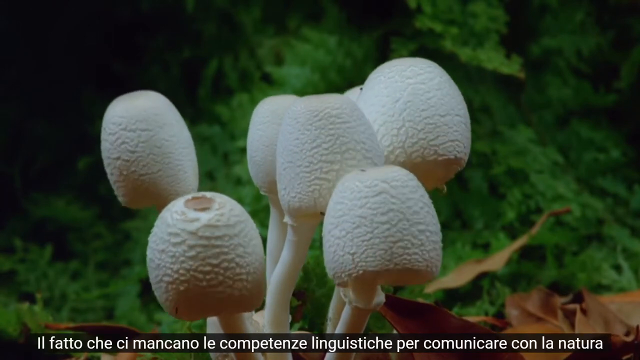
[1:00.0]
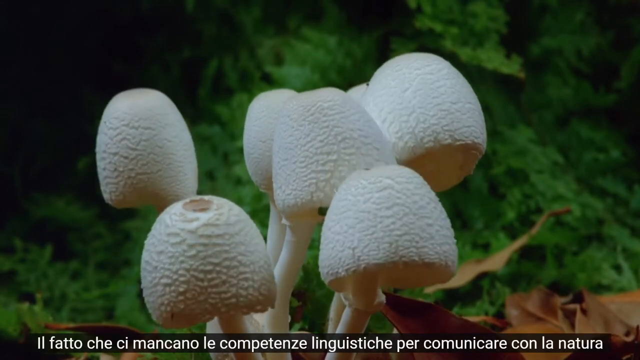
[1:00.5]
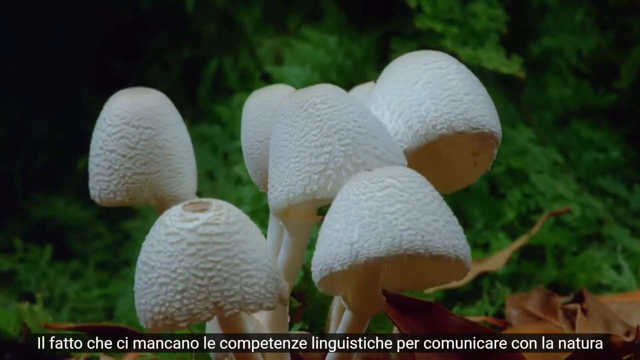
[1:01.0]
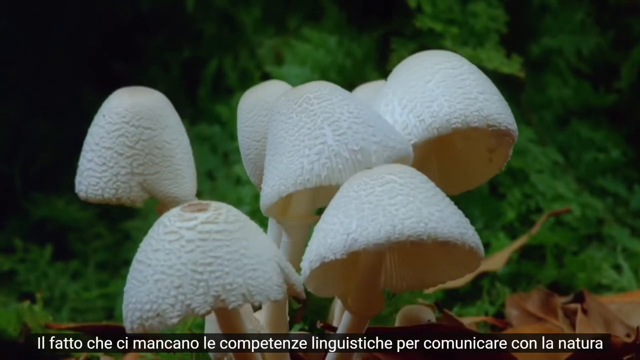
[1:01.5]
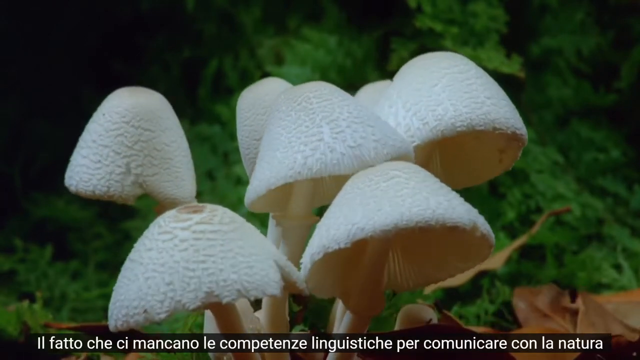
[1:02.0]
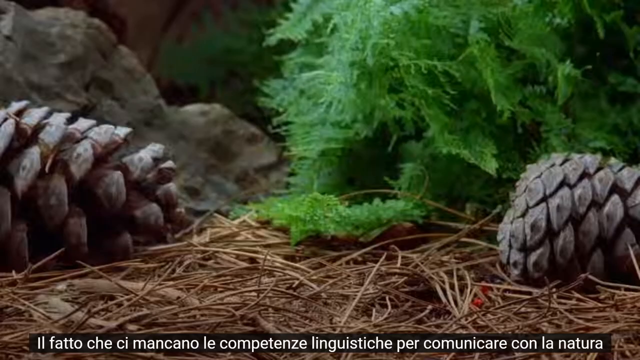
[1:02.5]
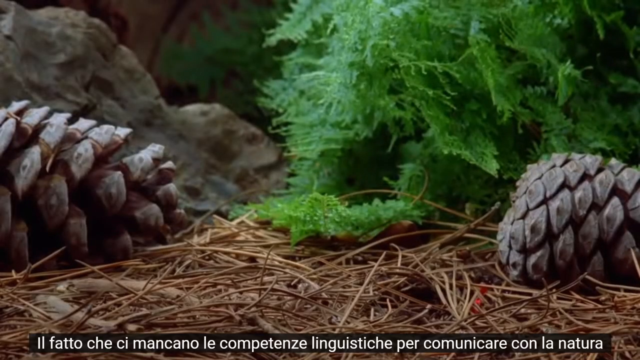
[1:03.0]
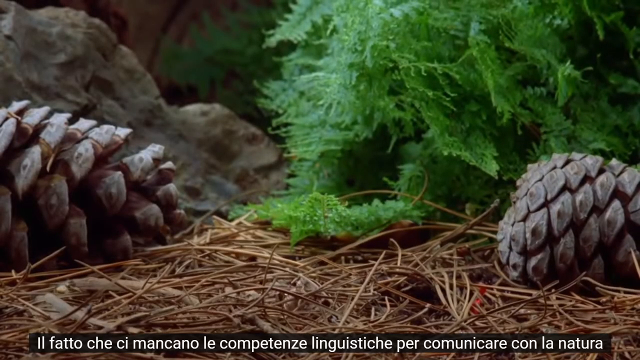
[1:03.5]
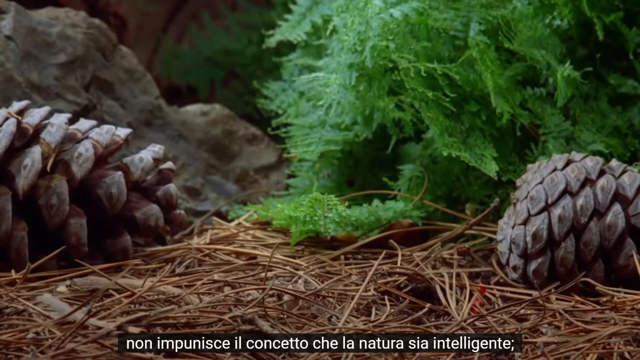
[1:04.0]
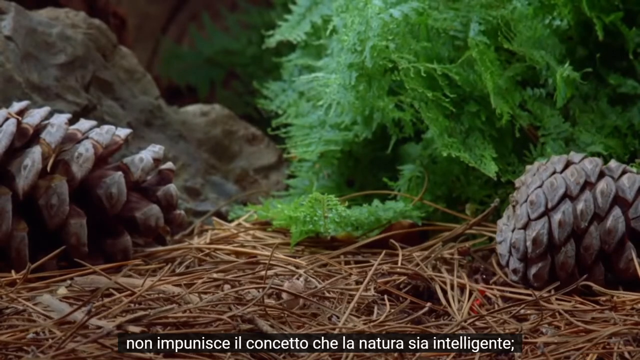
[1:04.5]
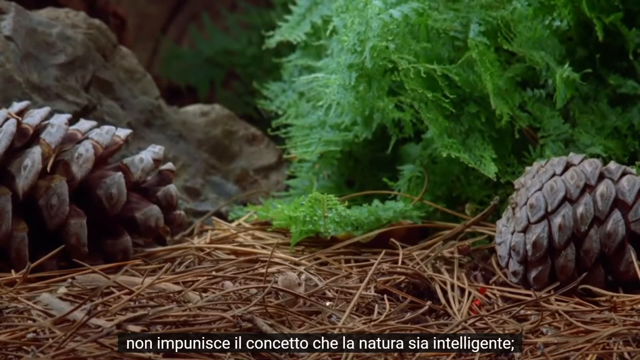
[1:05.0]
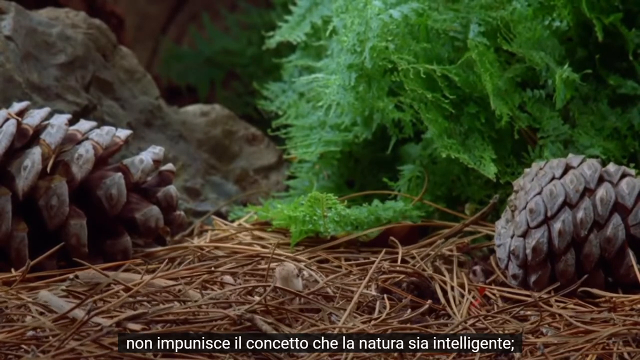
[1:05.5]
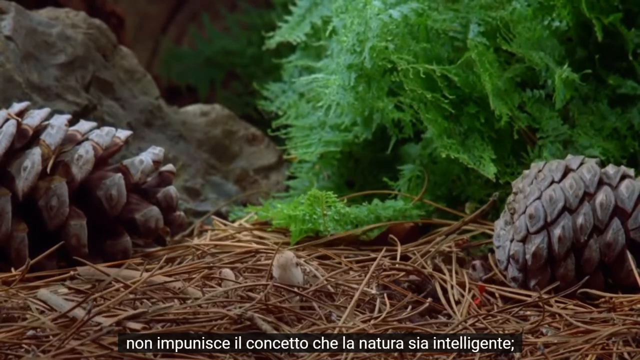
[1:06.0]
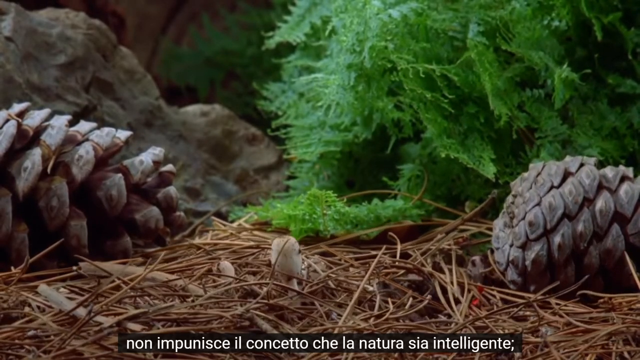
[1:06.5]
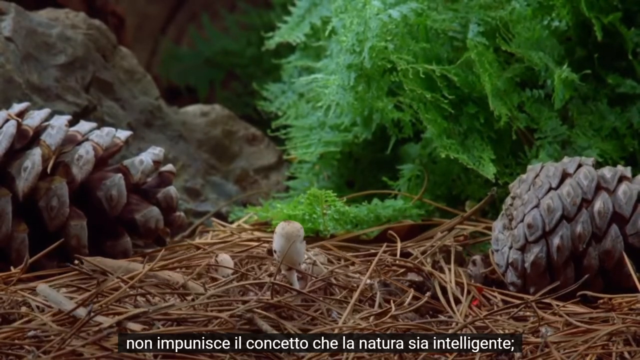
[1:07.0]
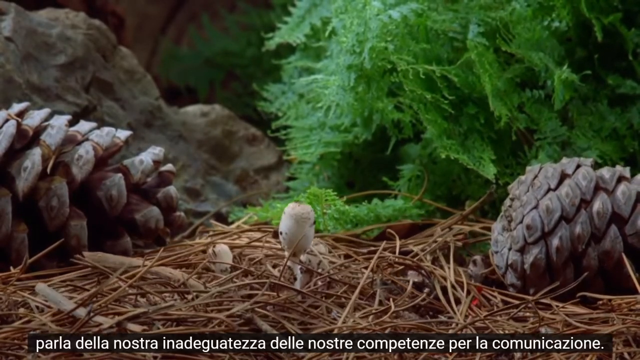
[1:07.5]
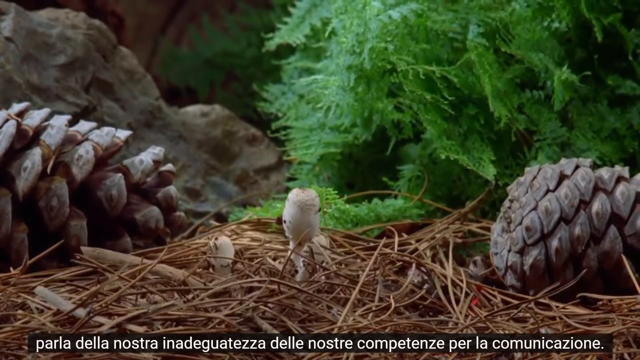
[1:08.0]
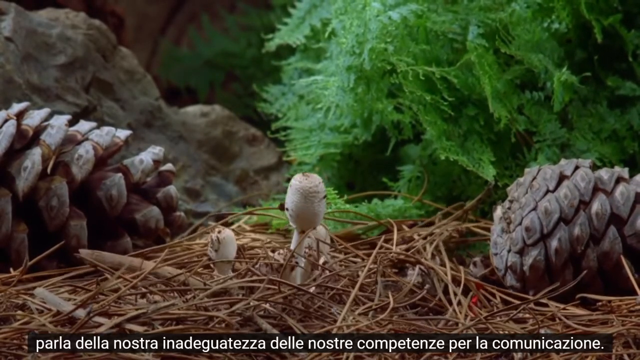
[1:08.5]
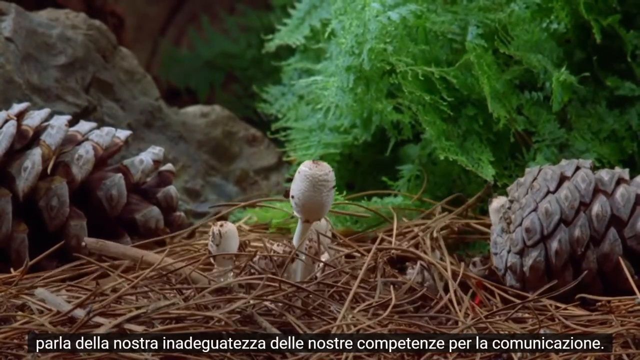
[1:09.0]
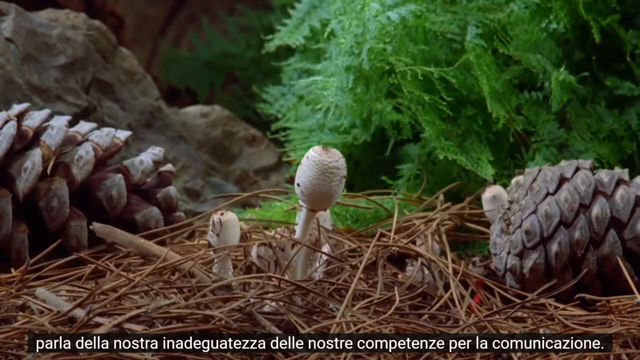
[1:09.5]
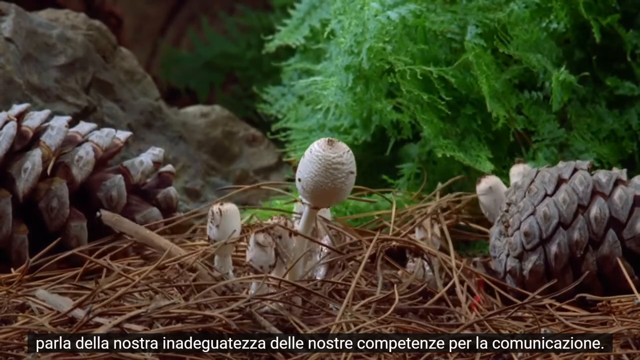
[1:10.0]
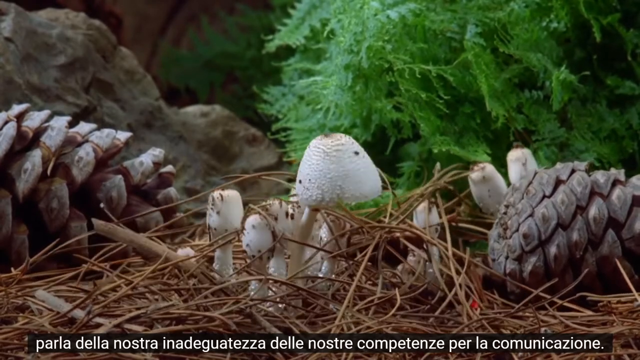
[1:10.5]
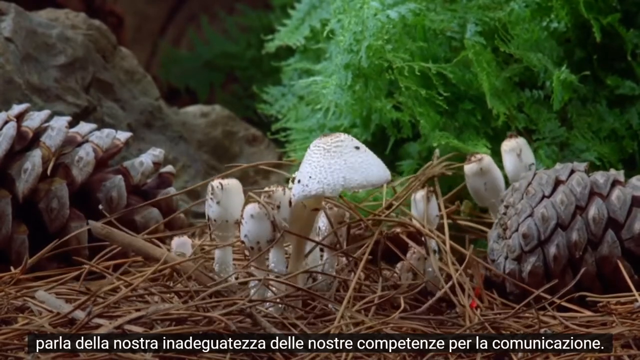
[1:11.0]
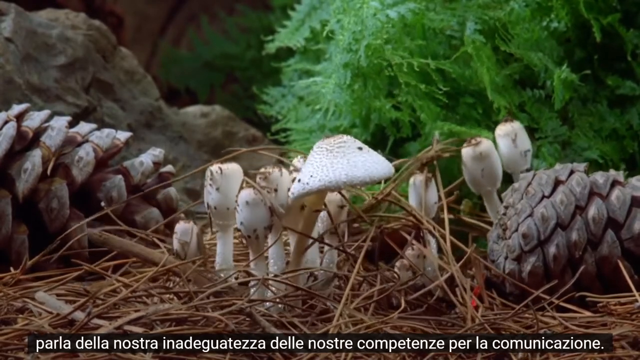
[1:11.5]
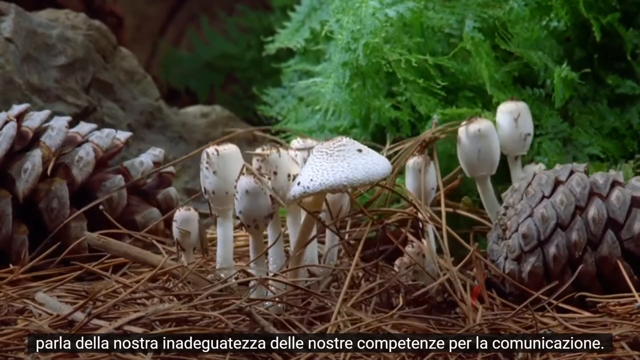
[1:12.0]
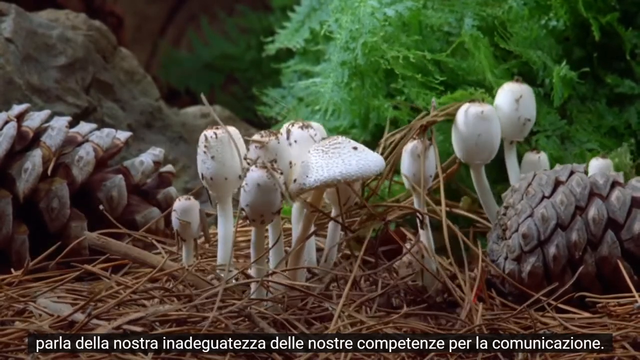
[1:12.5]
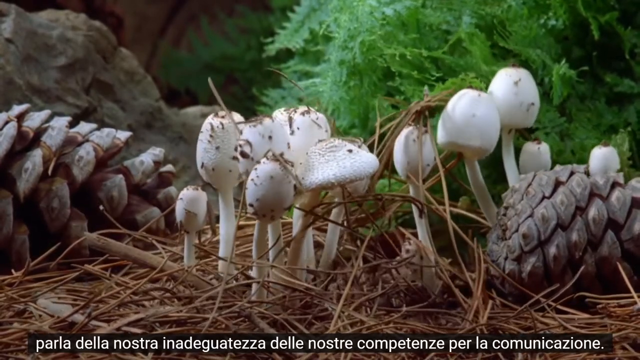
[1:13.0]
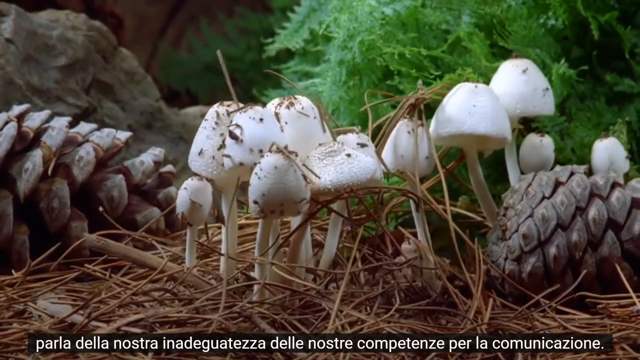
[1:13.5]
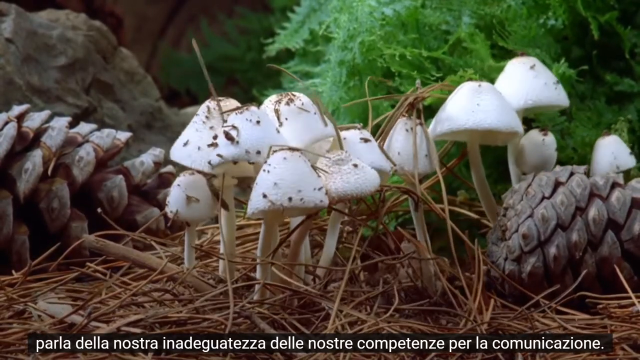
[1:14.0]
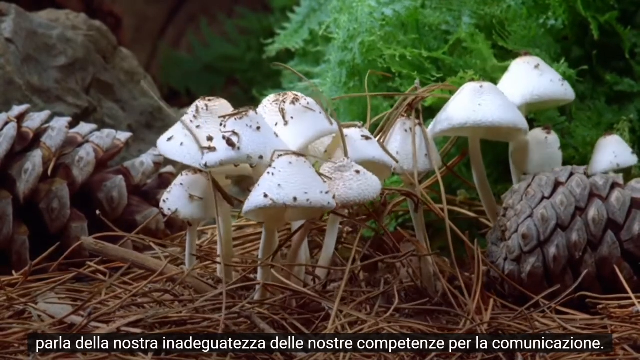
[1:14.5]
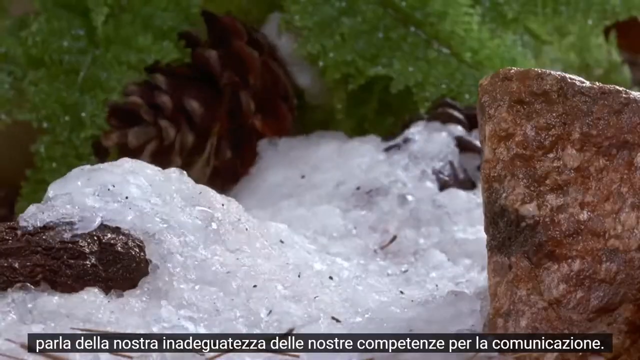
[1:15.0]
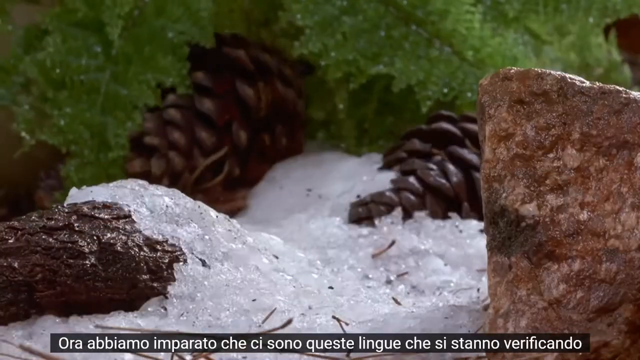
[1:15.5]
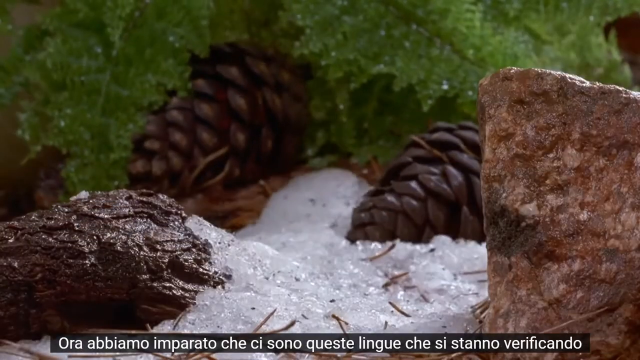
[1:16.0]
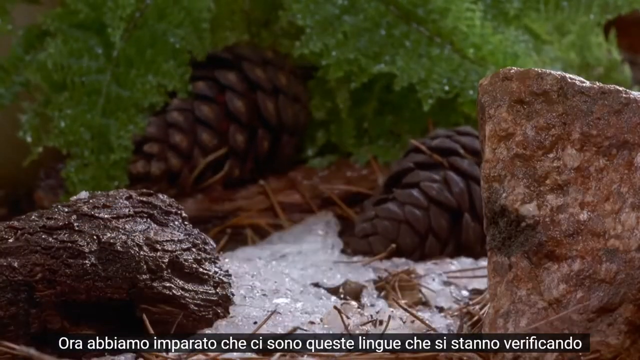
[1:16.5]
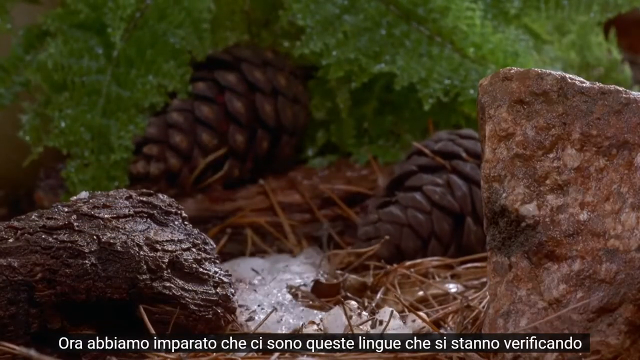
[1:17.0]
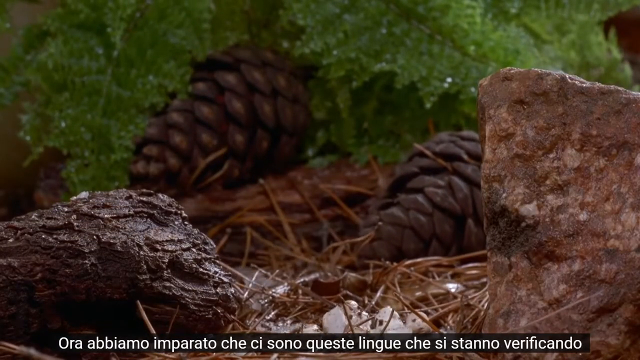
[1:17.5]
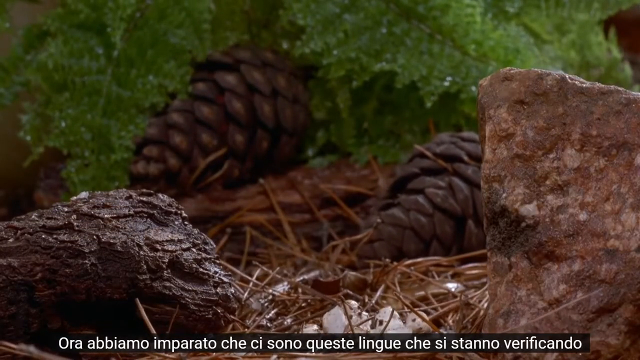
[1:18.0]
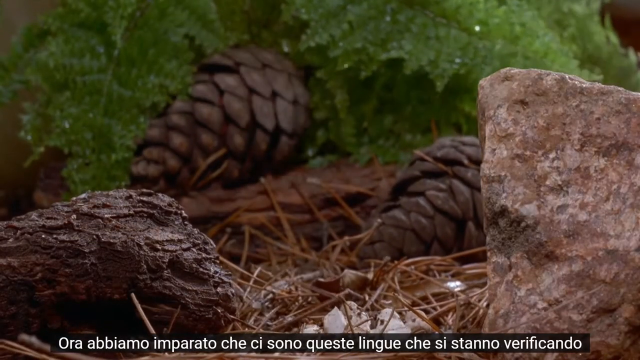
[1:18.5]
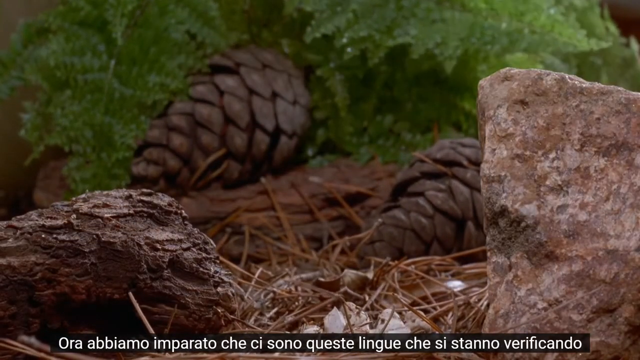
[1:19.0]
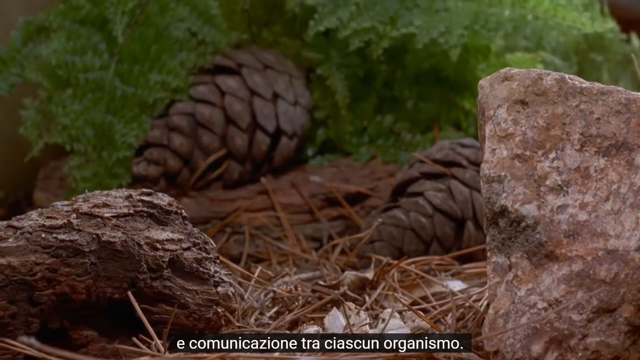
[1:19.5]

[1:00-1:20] Six mushrooms are visible: two in the foreground, one slightly obscured by the mushroom on the right, behind and between them, and another behind that one, even more obscured. Another mushroom is to the left behind the front mushroom, slightly higher, and a further one is to the right behind the other foreground mushroom, partially obscured by it and the mushroom behind it. They have white stalks and white heads; the heads are quite large, six to seven times the width of the stalks. Green foliage is behind. The heads expand outwards at the bottom to form domes, though the mushrooms are not seen becoming circular. The scene changes to a pine cone lying on its side at the left of the screen and a smaller pine cone lying on the right, with twigs across the bottom between them. There is green foliage in the centre and to the right, and to the left behind the pine cone on its side there is a rock and presumably another rock behind. The pine cone on the right rotates, its top moving towards the screen. The twigs and some of the green foliage on the ground move slightly, and then a large mushroom starts to stick out from the twigs in the centre of the screen, along with a smaller mushroom with just its head poking out. The head is about the same height as the stalk and about three times its width, cylindrical at this point. The mushrooms continue to poke out and more join them: first two on the right-hand side of the mushroom behind the pine cone, then a group of three sprouting in the centre right, and another two or three between the two original mushrooms just to the centre left. Mushrooms also start to sprout at the edge of the pine cone on the left-hand side, and two at the right are above the pine cone. The first mushroom's head becomes a dome and then turns into a cap, and all the mushrooms start to unfurl as their caps develop. Debris, bits of earth and twig accumulated as the mushrooms came through the ground, is on the mushroom caps, mostly left of centre. Bits are stacked like a tipi around one of the mushrooms just to the centre right, and the twigs in general have been lifted by the developing mushrooms. The video then cuts to another scene with a rectangular rock whose top slopes down from left to right, at the bottom right of the screen, covering 80% of the height of the frame and maybe 20% of the width. Two pine cones are in the centre at 45 degrees, starting above halfway up. There is green foliage behind and ice in the middle of the screen, which slowly melts to reveal a branch at the bottom left and twigs in the centre of the screen between the pine cones, the branch and the rock. The leaves in the background and the twigs begin to move, and then the scene ends.